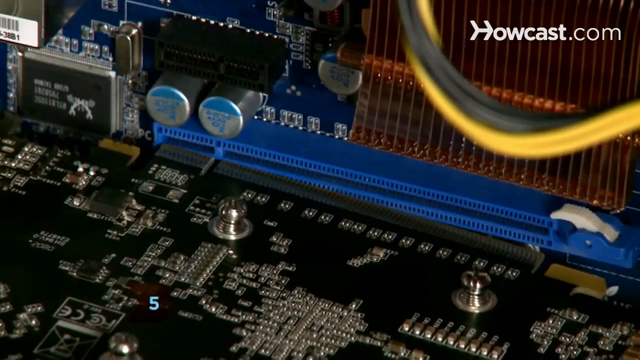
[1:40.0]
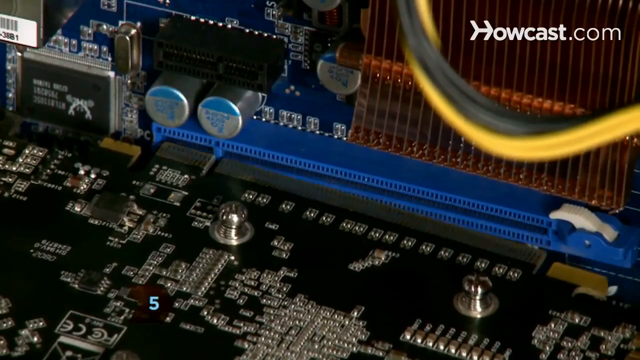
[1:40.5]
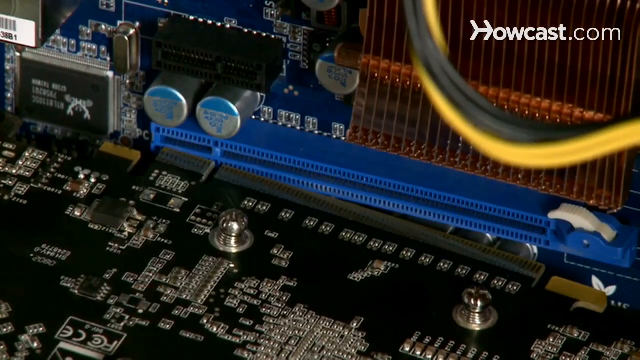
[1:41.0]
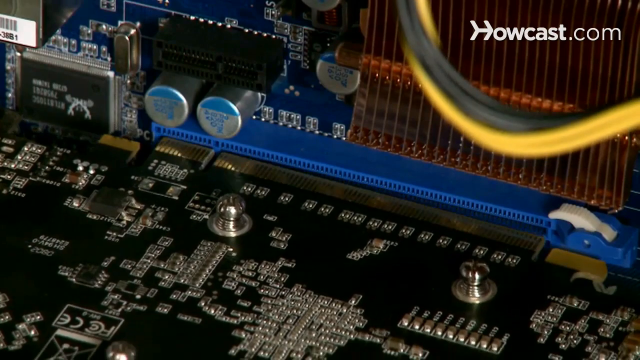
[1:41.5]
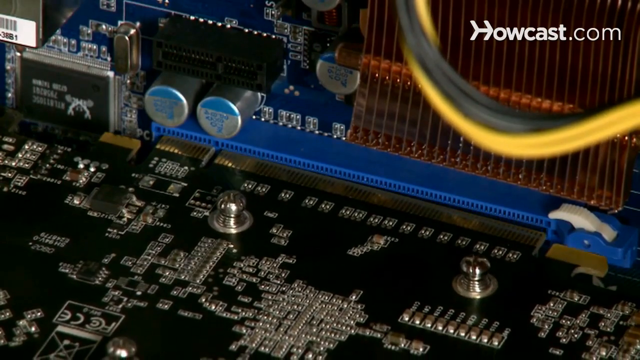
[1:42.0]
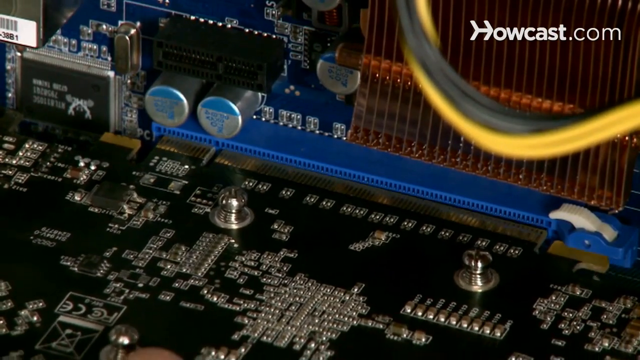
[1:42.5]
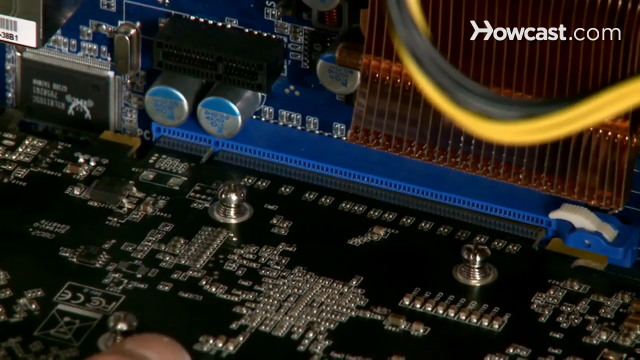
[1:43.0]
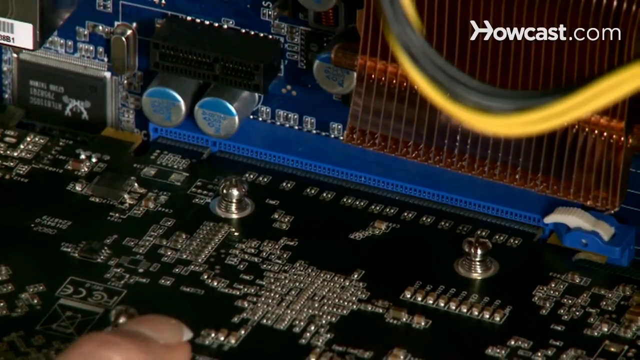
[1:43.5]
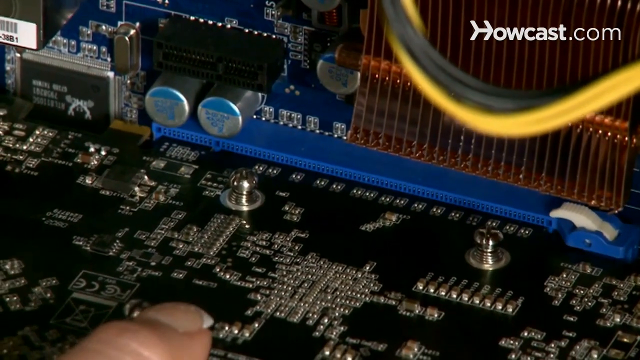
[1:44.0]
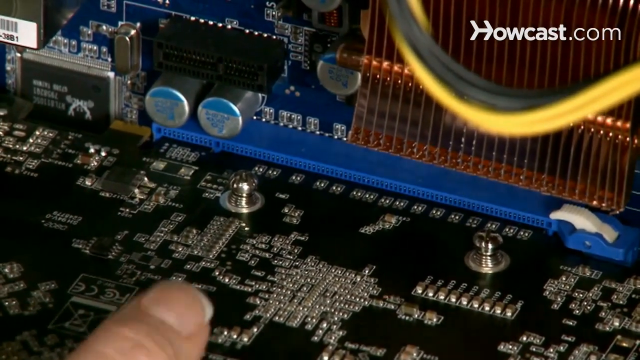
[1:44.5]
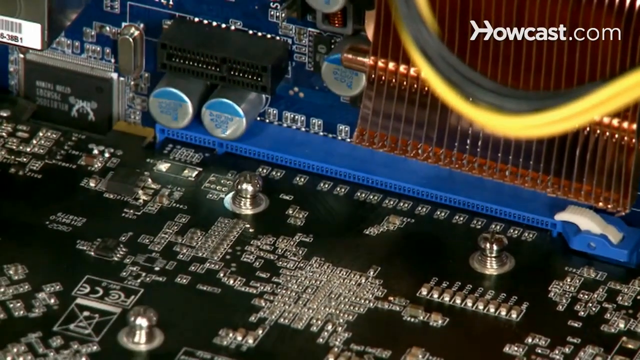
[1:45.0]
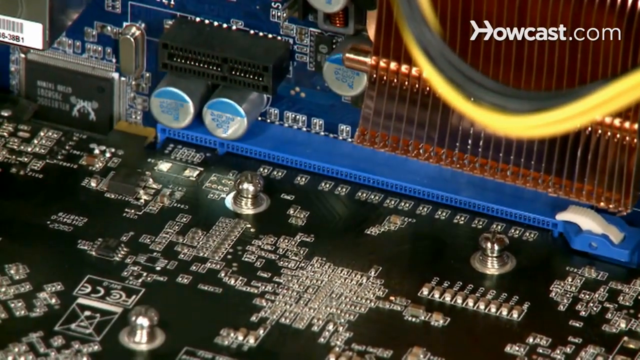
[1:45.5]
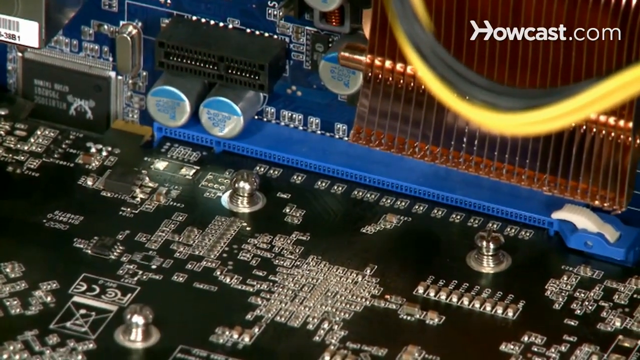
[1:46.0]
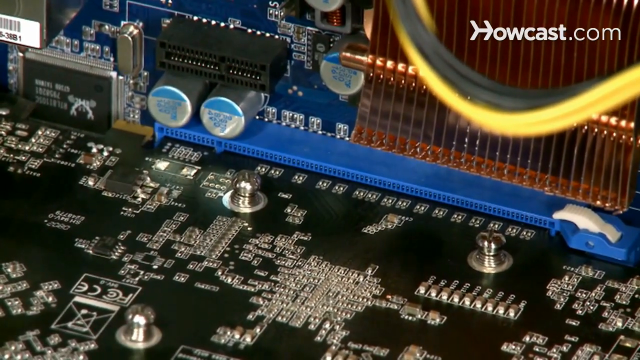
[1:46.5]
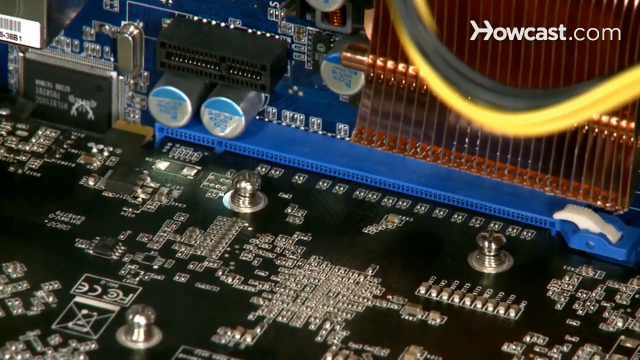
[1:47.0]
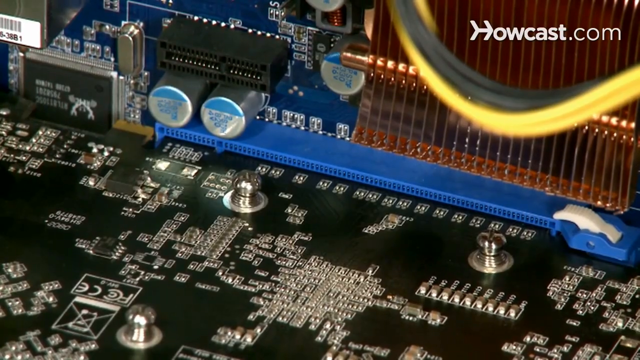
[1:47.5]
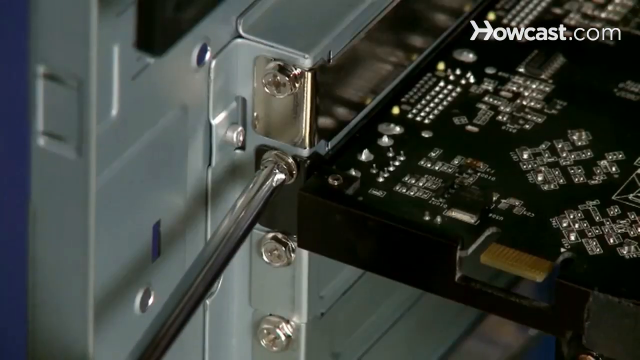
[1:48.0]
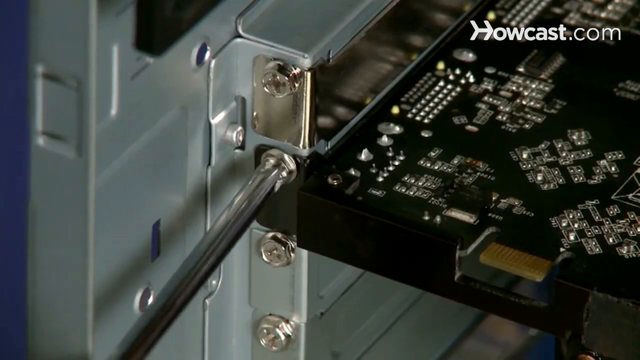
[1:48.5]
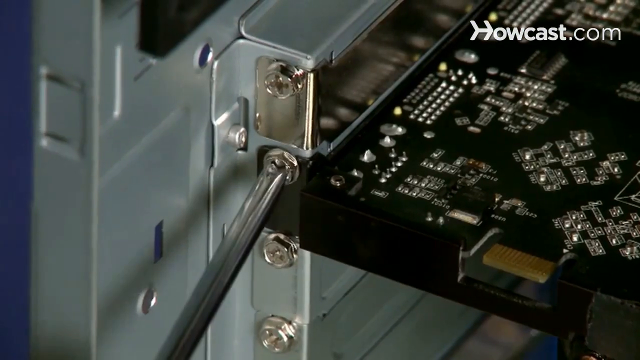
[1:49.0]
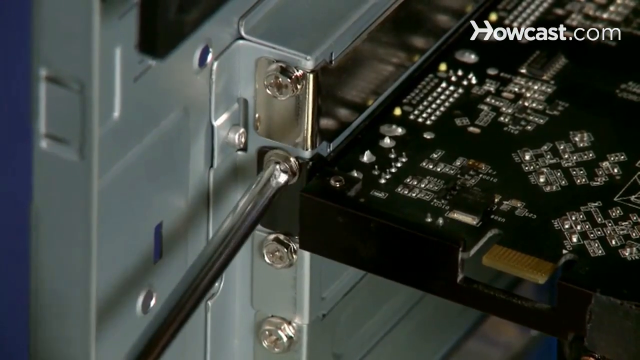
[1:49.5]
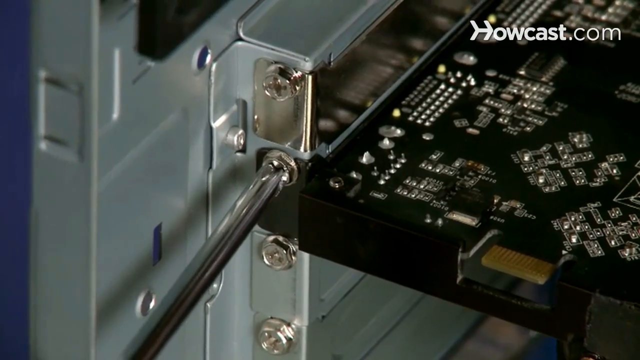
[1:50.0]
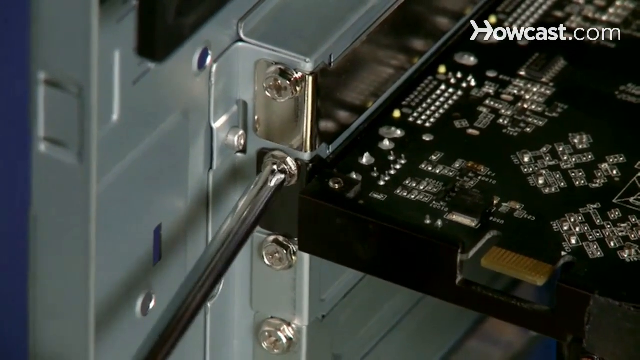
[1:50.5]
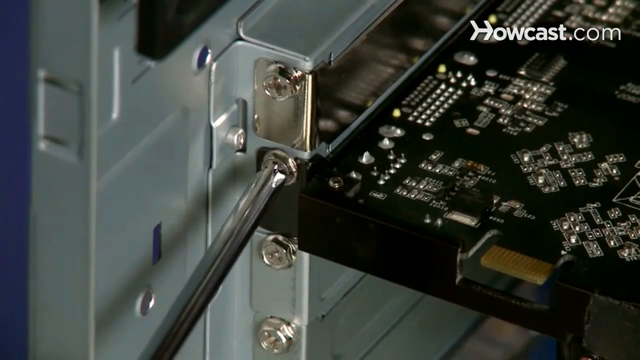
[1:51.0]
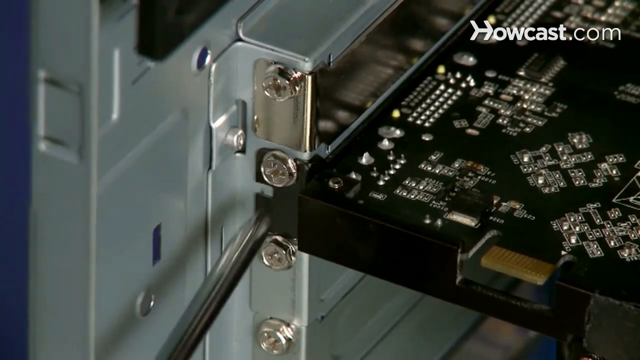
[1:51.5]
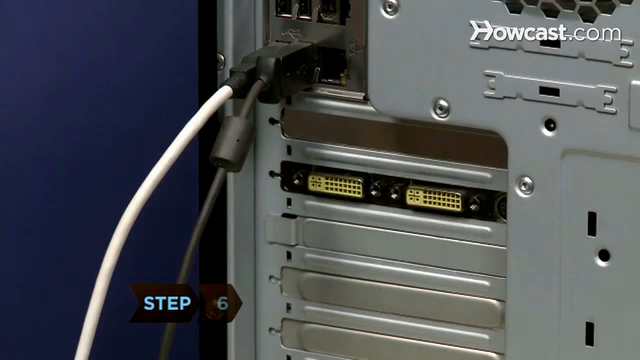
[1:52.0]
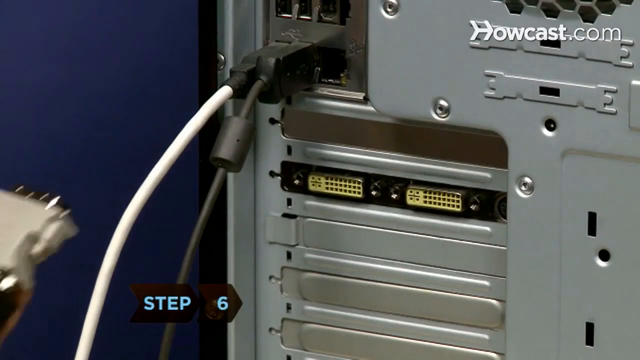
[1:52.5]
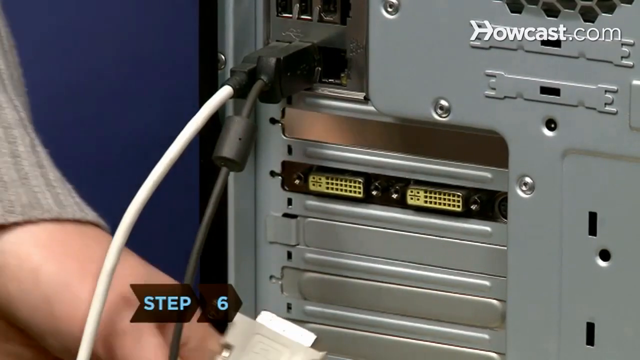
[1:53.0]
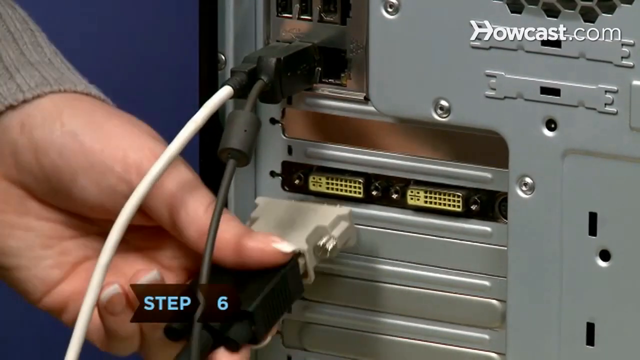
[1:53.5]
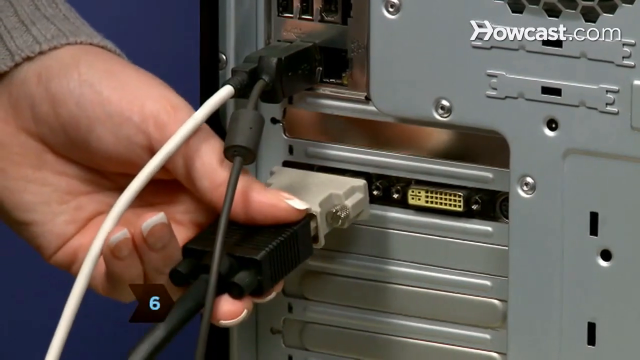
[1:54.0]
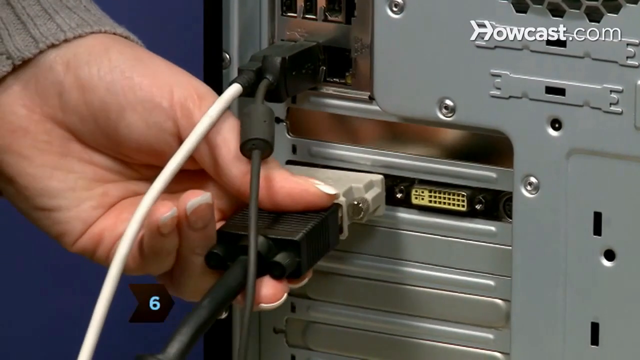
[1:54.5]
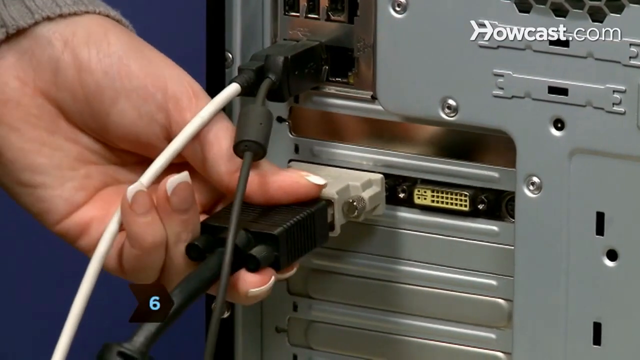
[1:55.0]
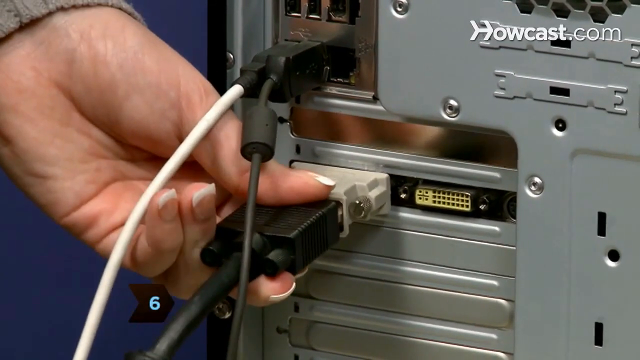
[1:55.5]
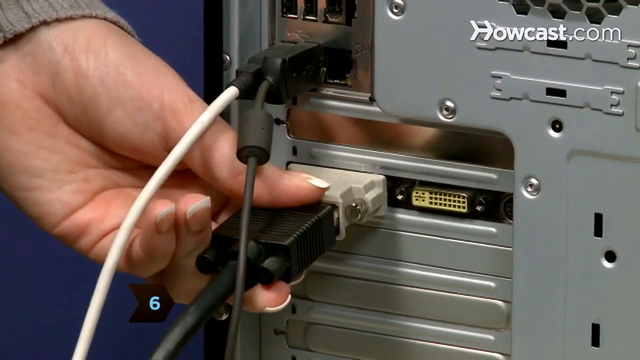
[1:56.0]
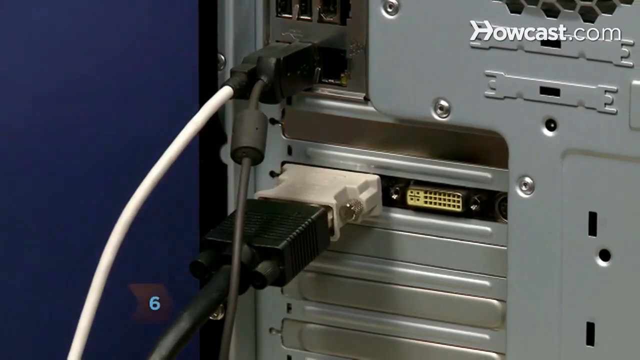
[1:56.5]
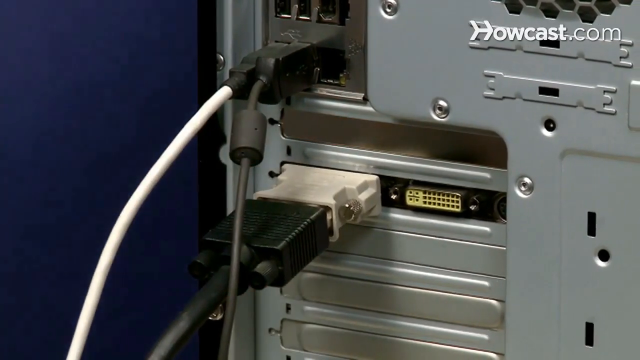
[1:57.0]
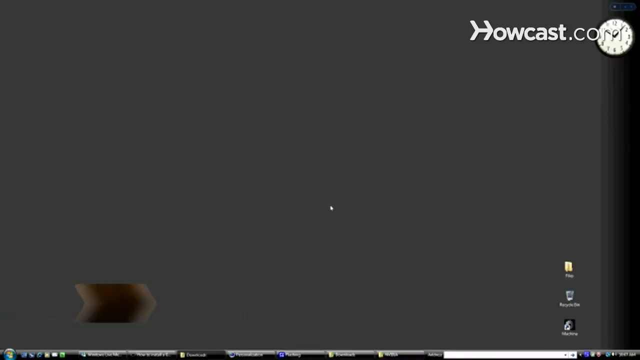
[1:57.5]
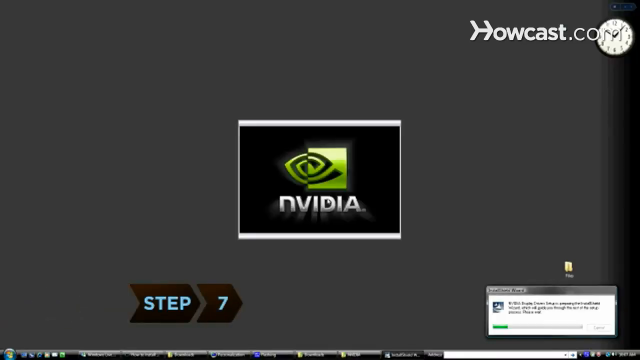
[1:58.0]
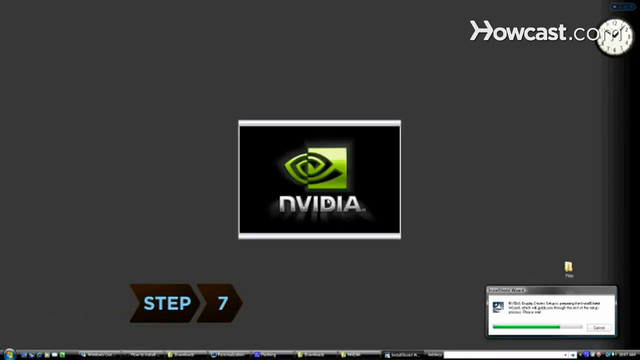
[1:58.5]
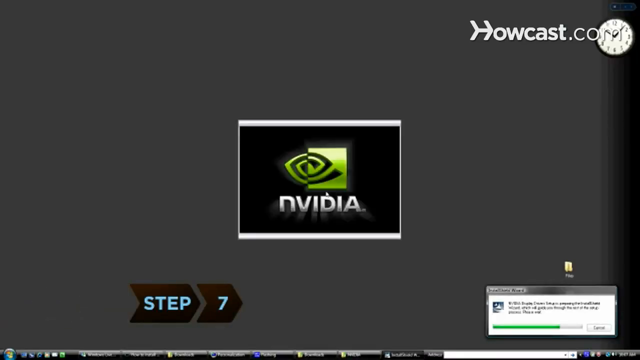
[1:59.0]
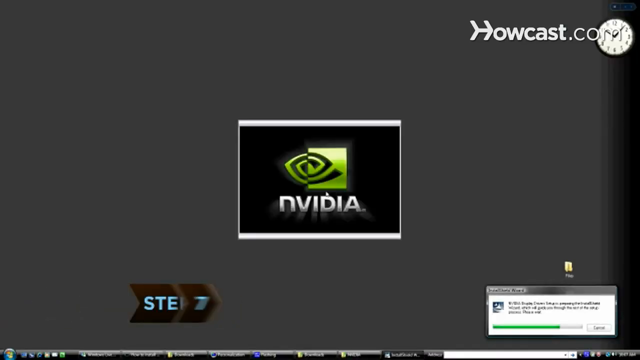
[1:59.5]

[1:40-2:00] She plugs in the graphics card and tightens things. The card is a DVI graphics card, and she plugs in the DVI cable. NVIDIA software is then installing.